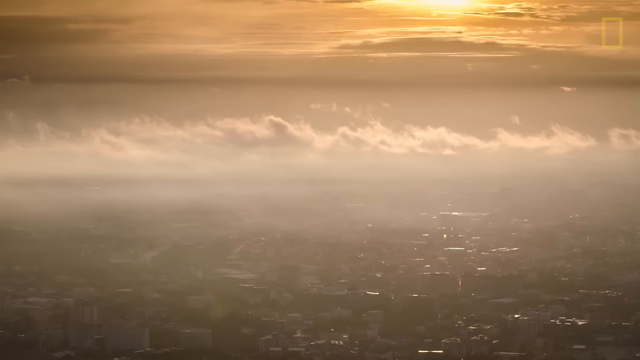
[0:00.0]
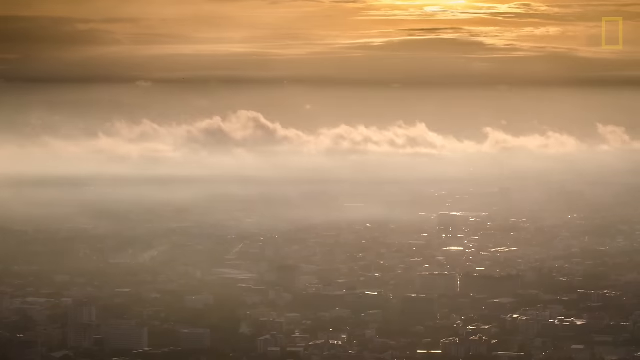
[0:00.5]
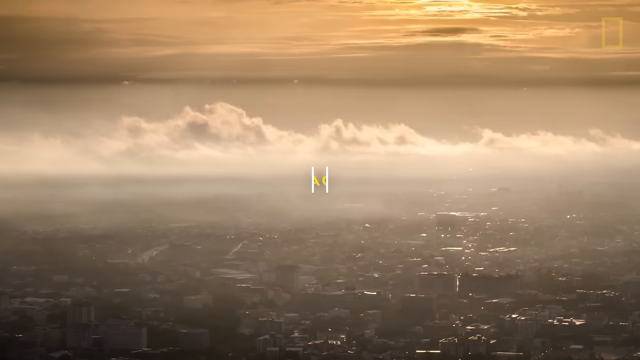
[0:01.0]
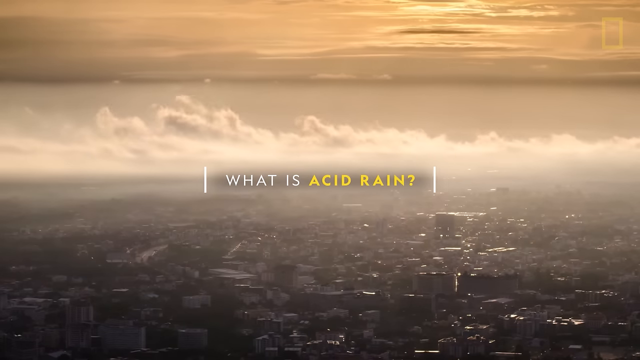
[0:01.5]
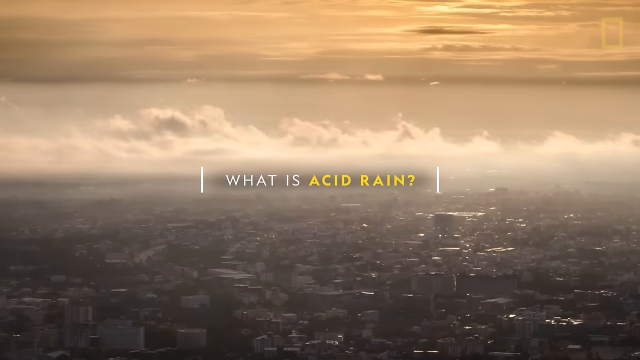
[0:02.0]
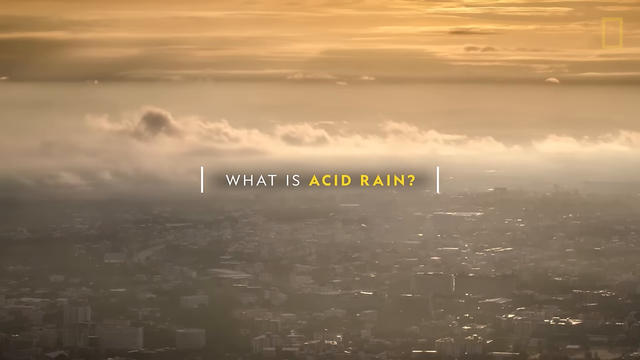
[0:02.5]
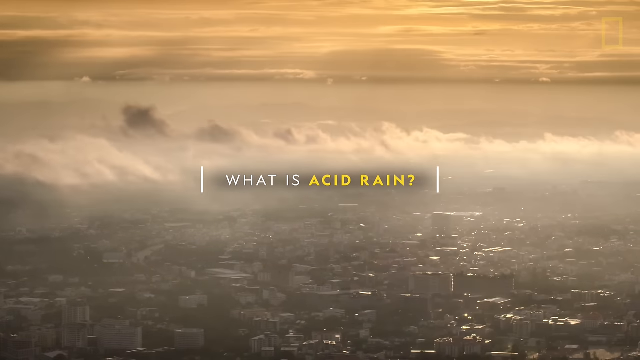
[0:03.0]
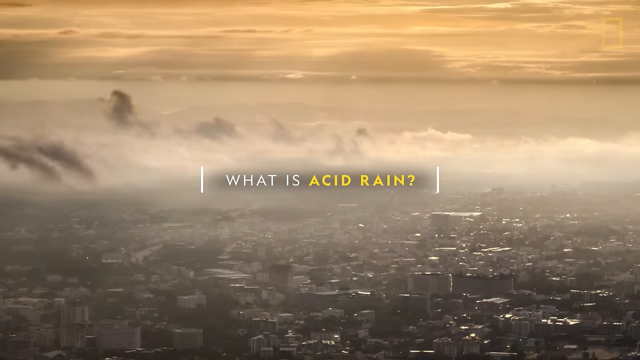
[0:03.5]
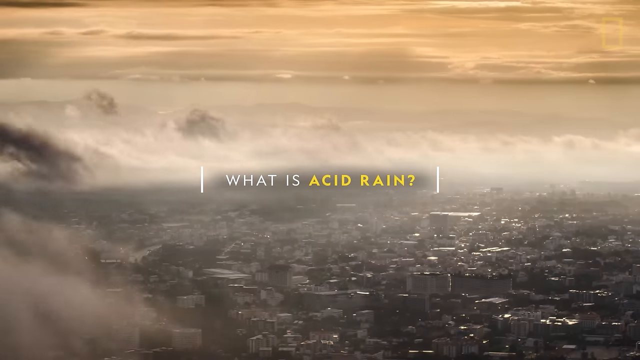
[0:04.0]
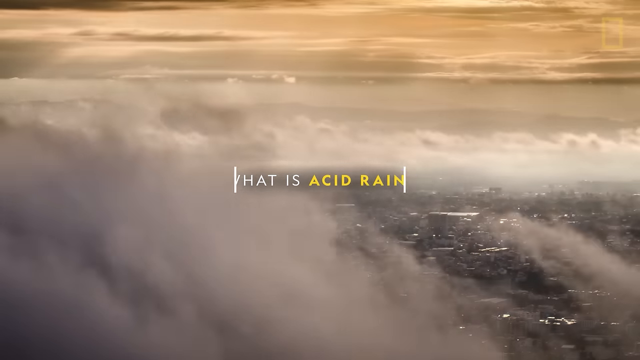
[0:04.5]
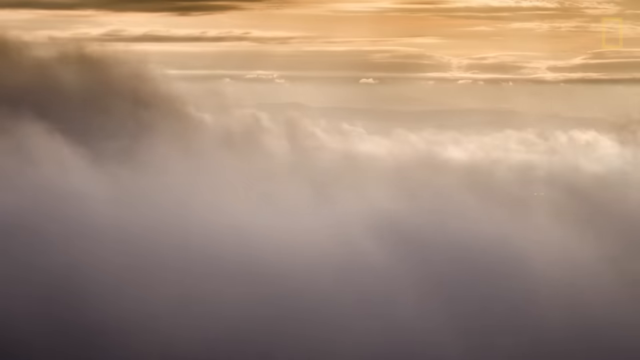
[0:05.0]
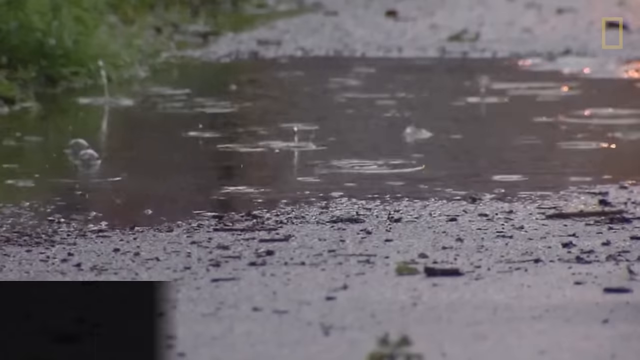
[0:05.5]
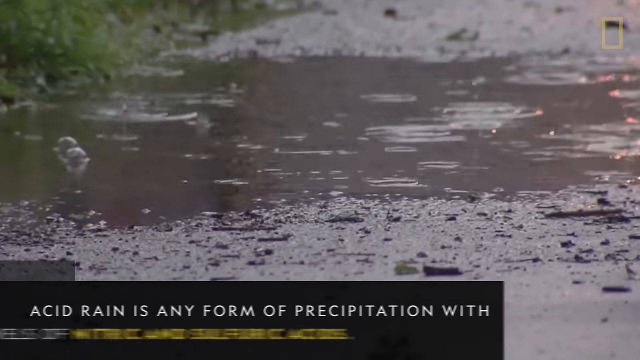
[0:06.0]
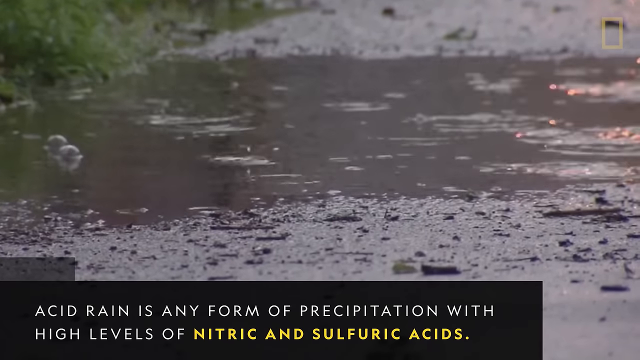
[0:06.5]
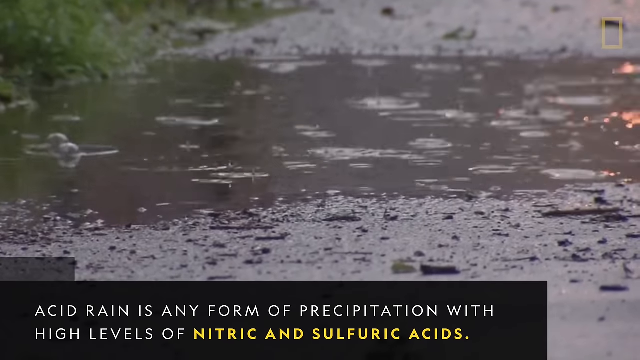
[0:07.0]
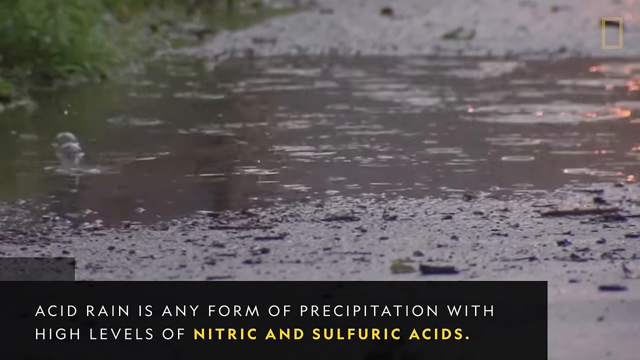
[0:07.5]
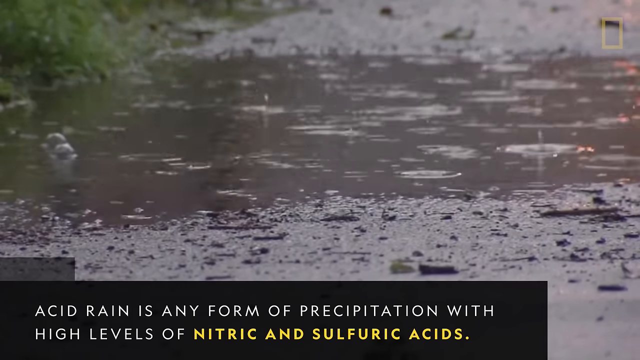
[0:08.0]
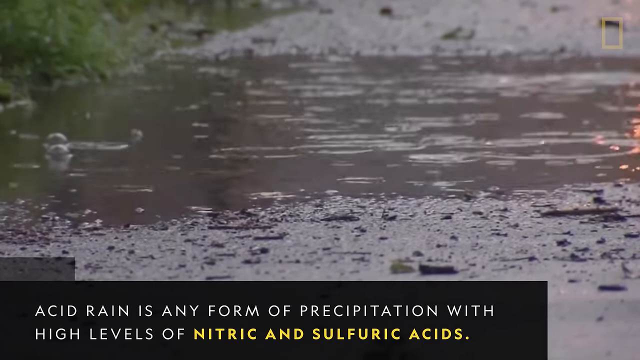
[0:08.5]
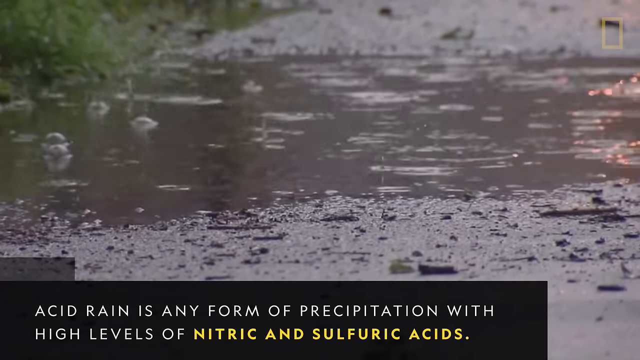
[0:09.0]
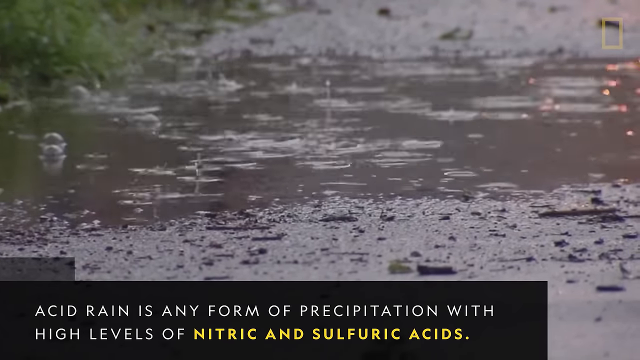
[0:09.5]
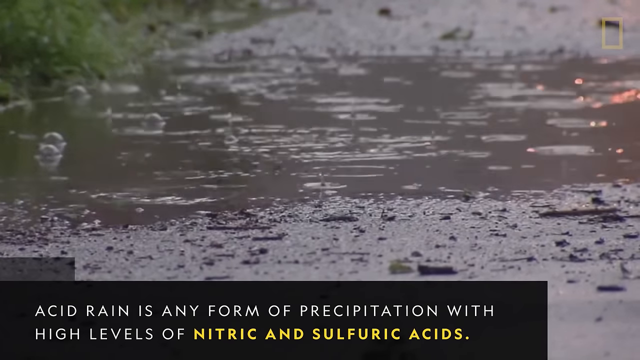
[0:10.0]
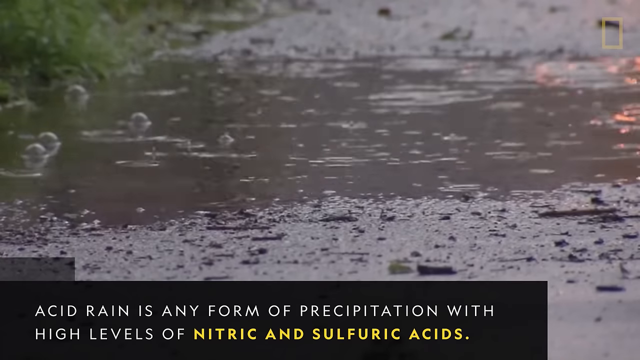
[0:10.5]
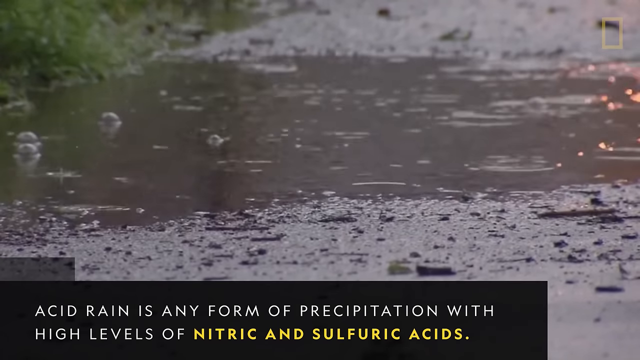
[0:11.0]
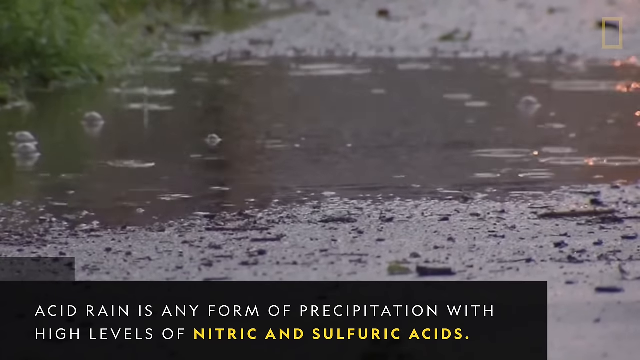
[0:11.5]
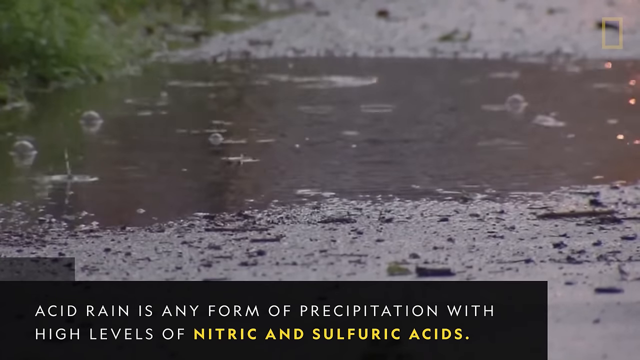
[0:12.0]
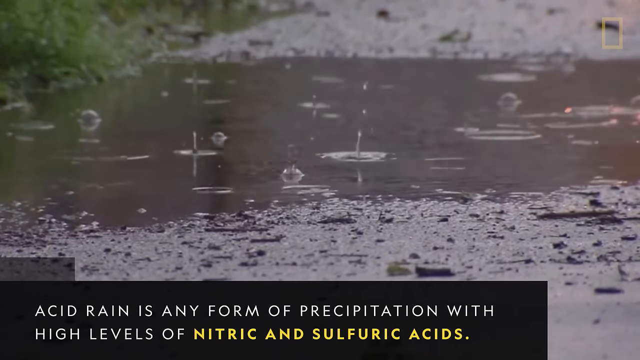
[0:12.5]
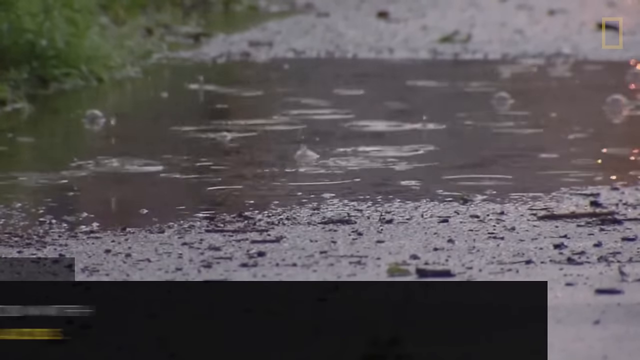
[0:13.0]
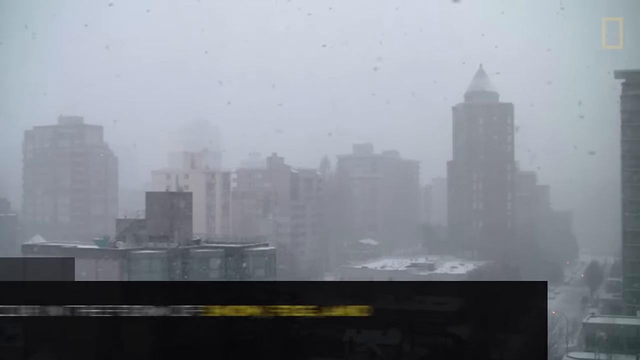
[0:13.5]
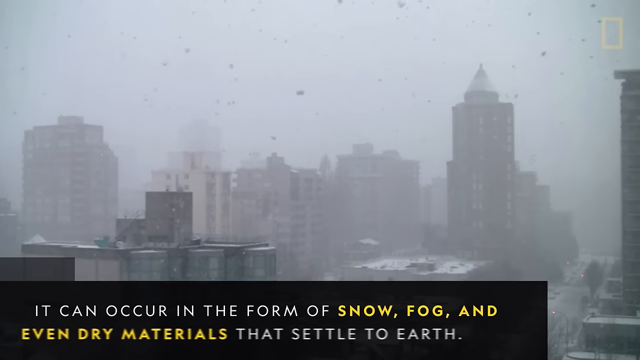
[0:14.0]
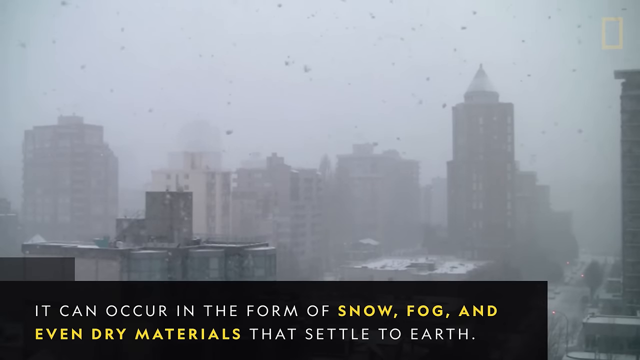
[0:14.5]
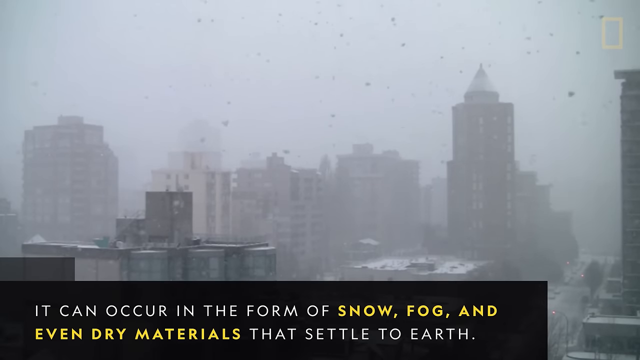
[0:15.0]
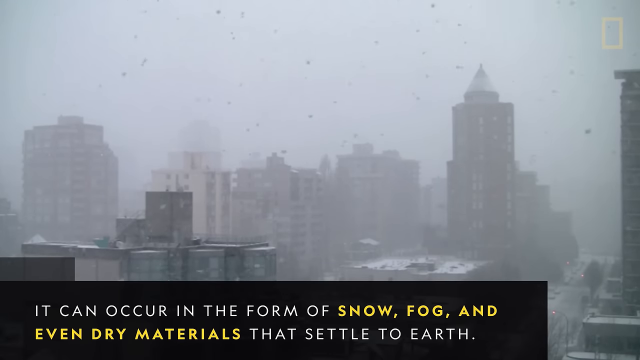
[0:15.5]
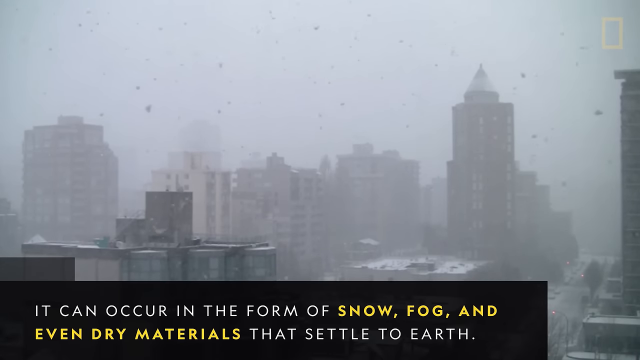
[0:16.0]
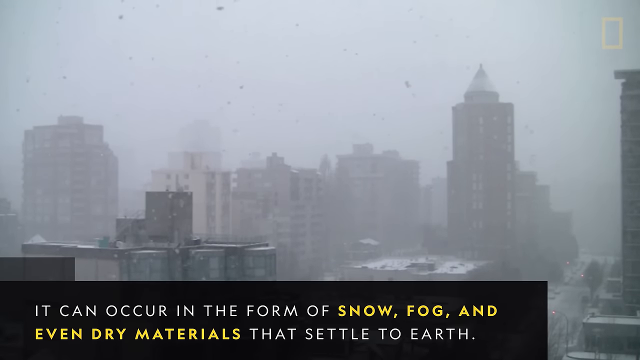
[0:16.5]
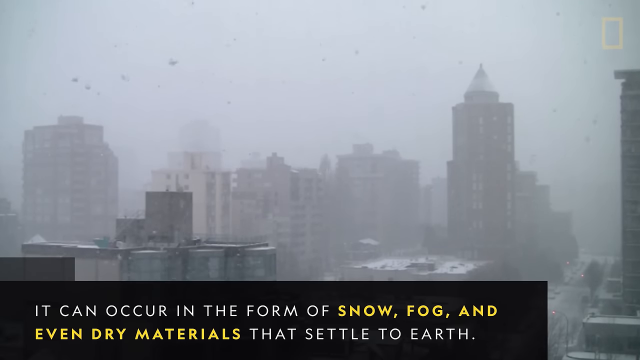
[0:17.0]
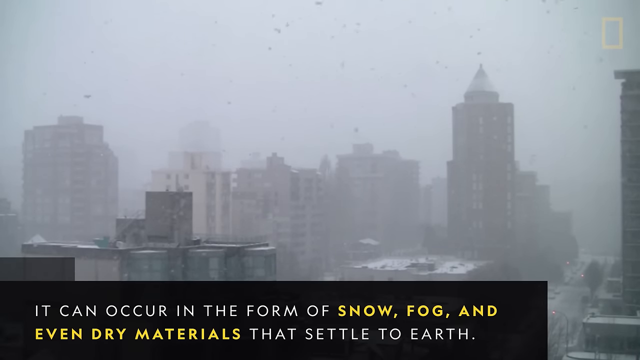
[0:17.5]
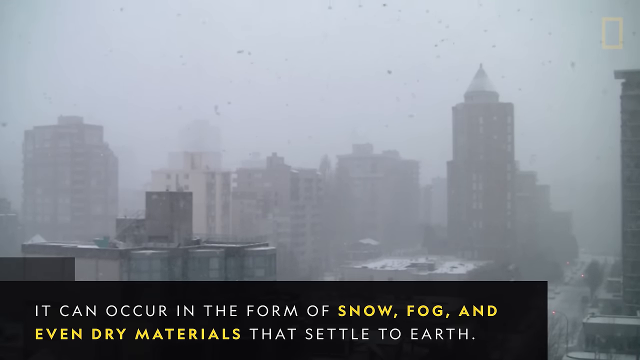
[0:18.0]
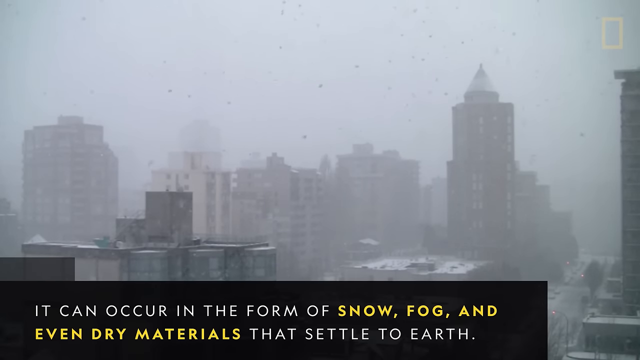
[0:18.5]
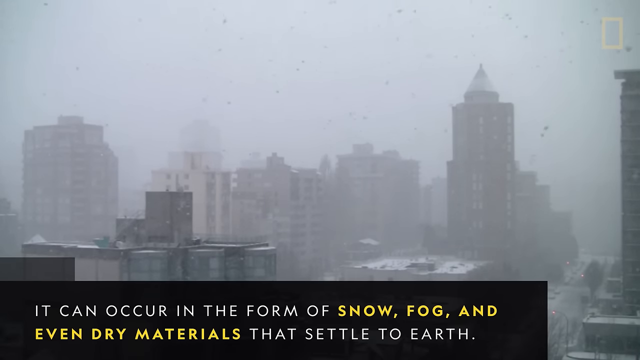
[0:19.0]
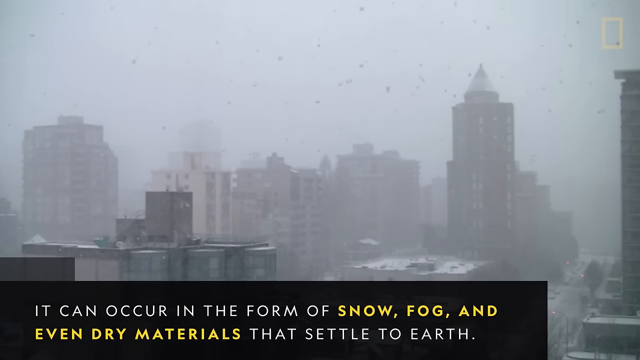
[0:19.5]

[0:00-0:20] The on-screen text asks "What is acid rain?" Text explains that acid rain can occur in any form, such as snow, fog, and even dry materials that settle to earth. The scene behind the text looks unpleasant and is probably fake.